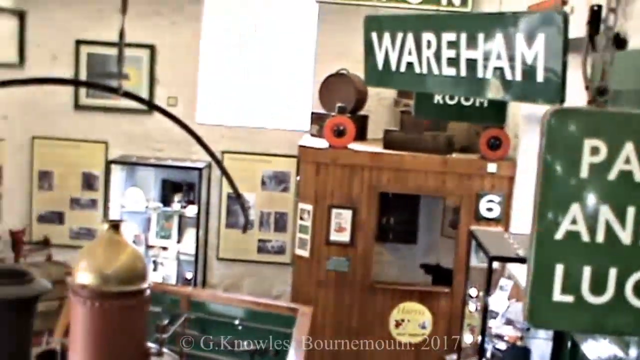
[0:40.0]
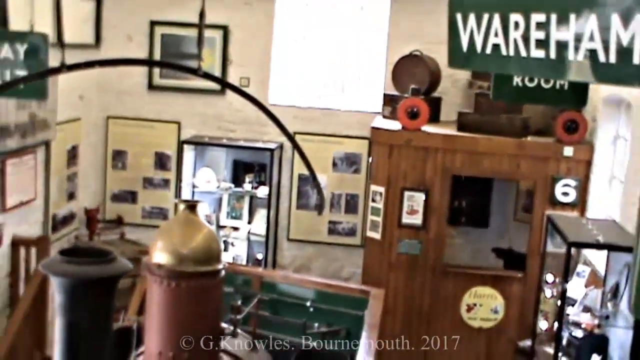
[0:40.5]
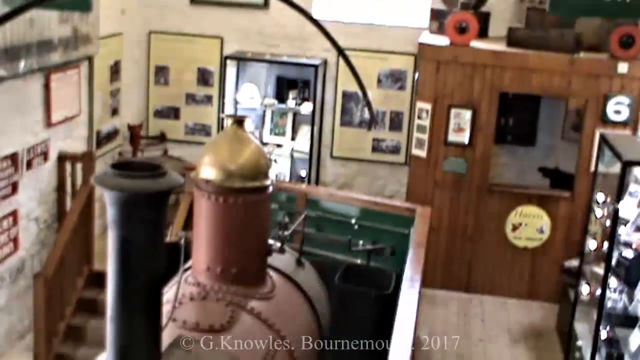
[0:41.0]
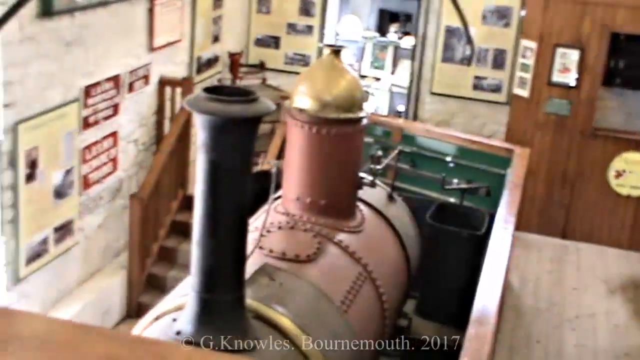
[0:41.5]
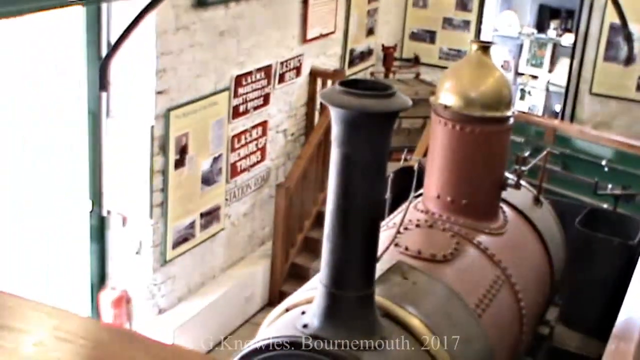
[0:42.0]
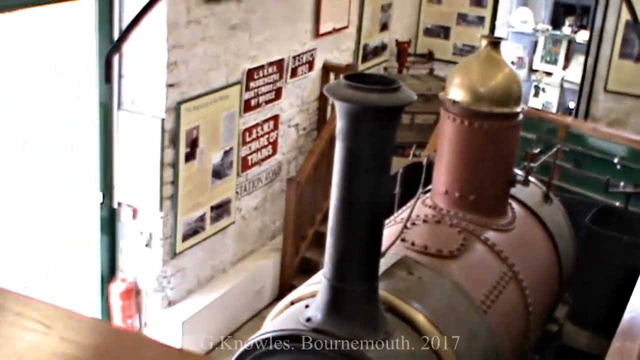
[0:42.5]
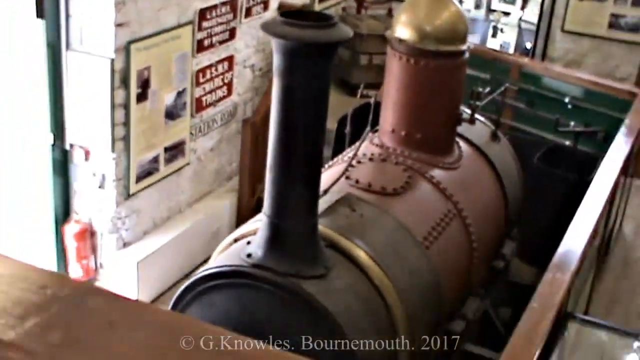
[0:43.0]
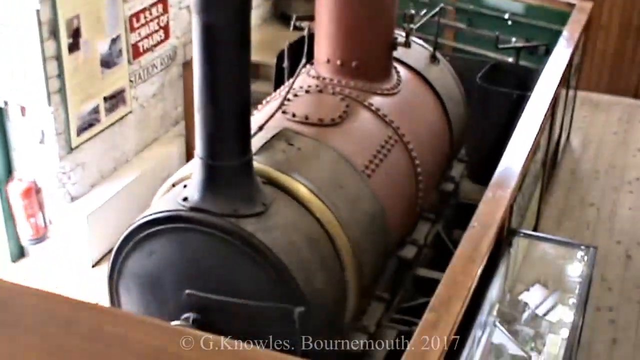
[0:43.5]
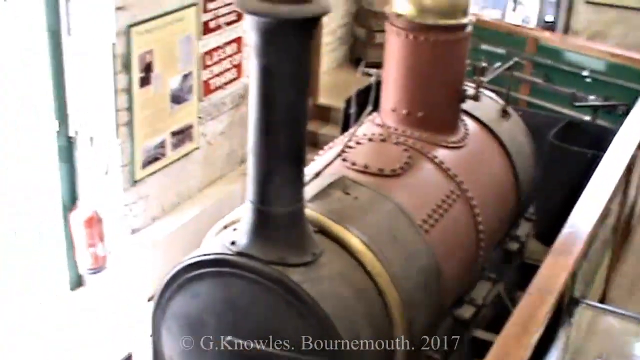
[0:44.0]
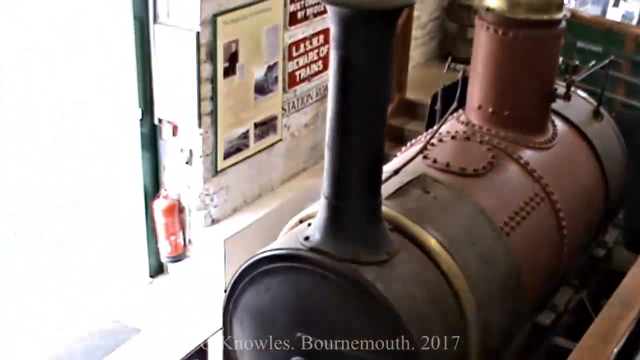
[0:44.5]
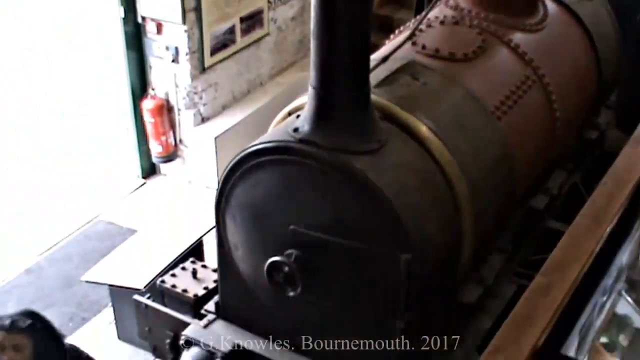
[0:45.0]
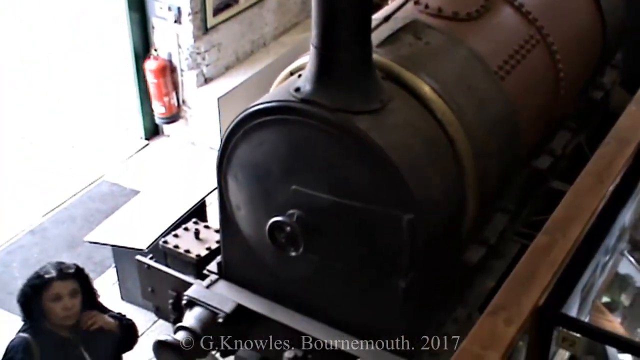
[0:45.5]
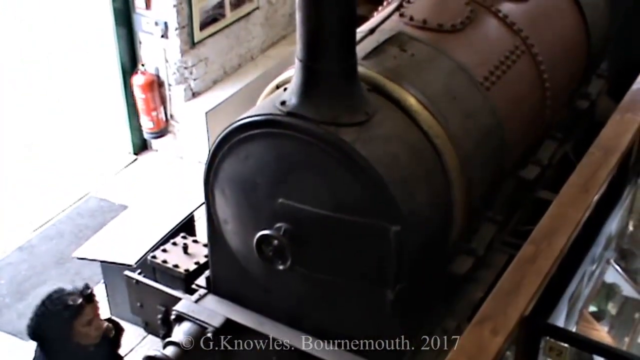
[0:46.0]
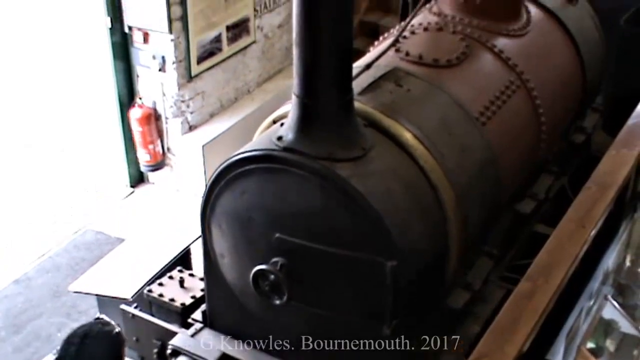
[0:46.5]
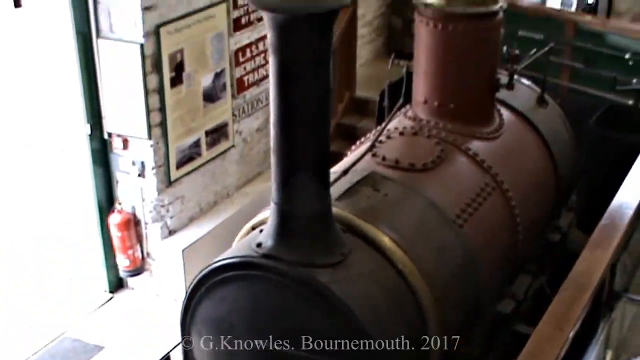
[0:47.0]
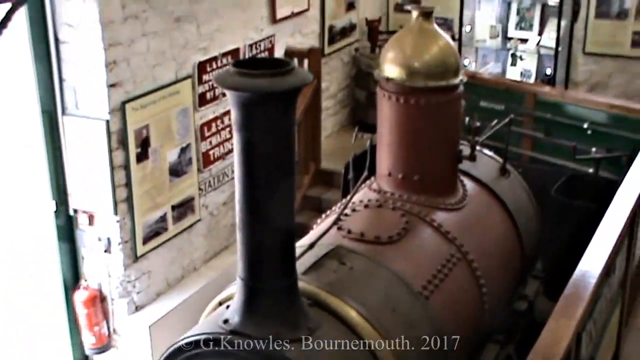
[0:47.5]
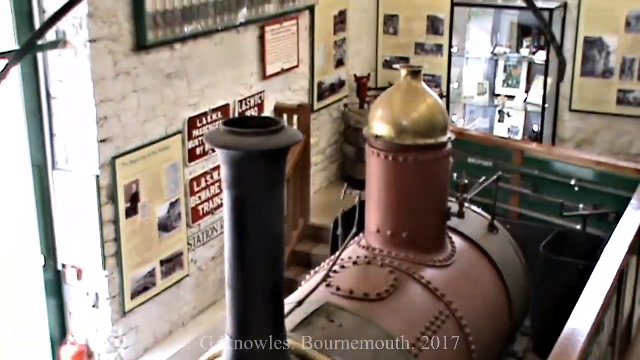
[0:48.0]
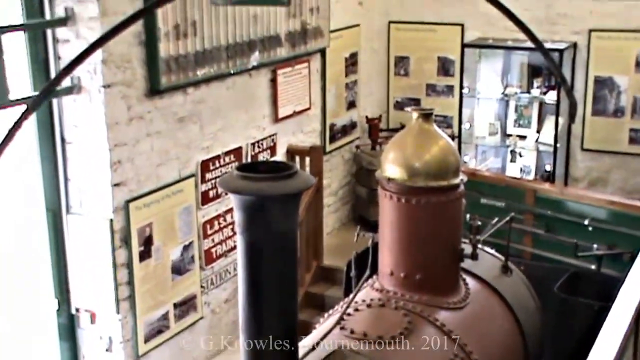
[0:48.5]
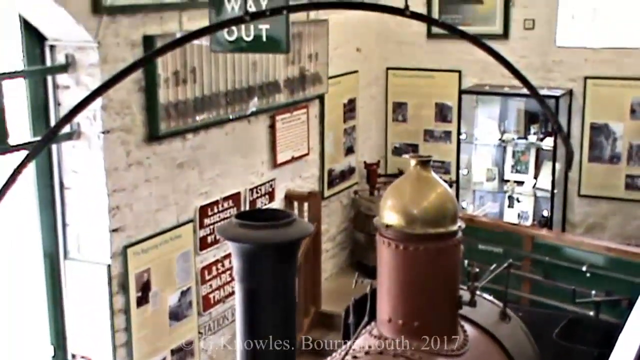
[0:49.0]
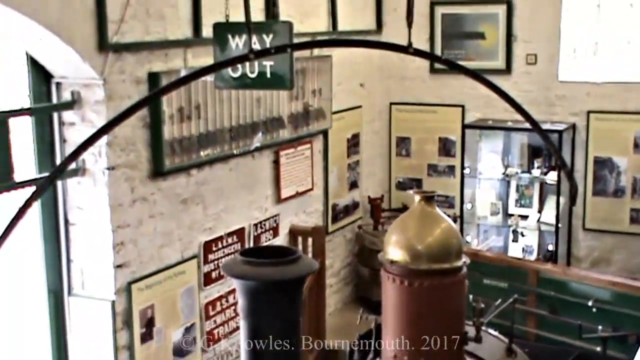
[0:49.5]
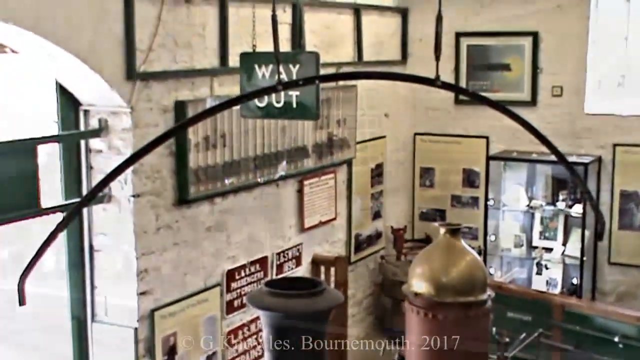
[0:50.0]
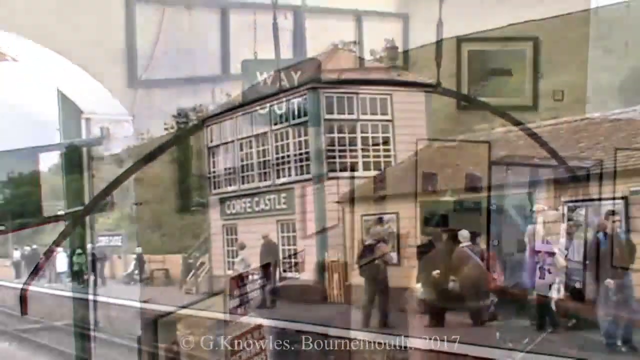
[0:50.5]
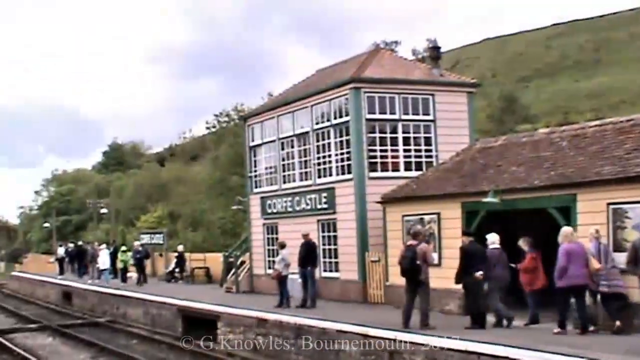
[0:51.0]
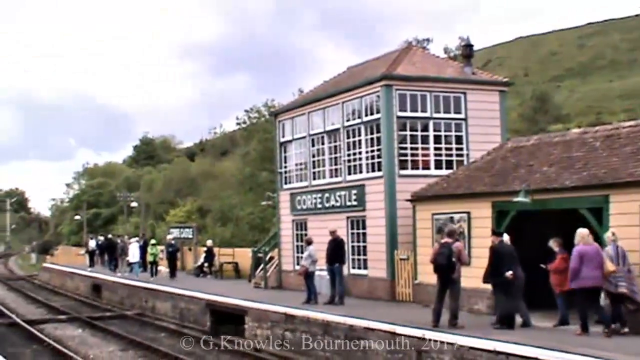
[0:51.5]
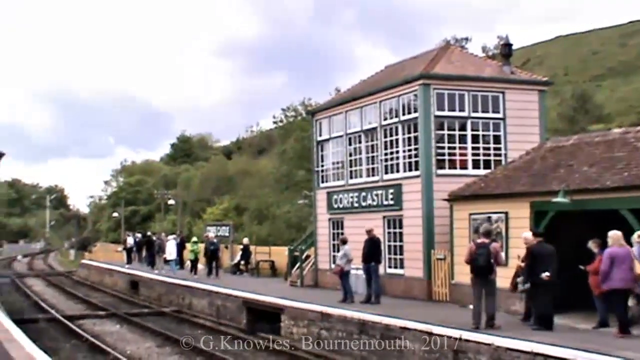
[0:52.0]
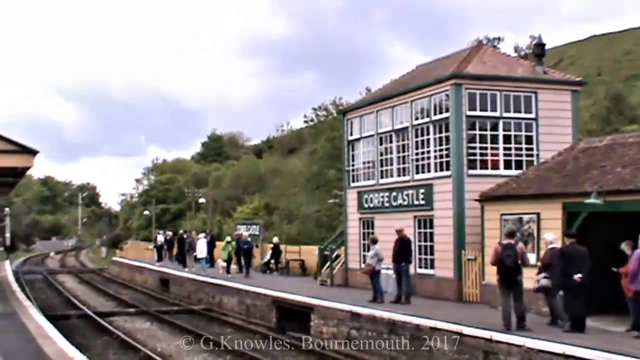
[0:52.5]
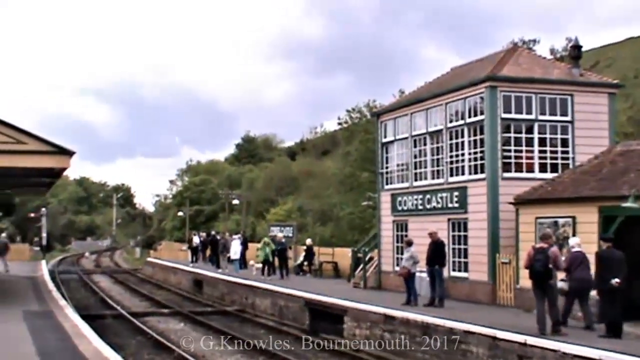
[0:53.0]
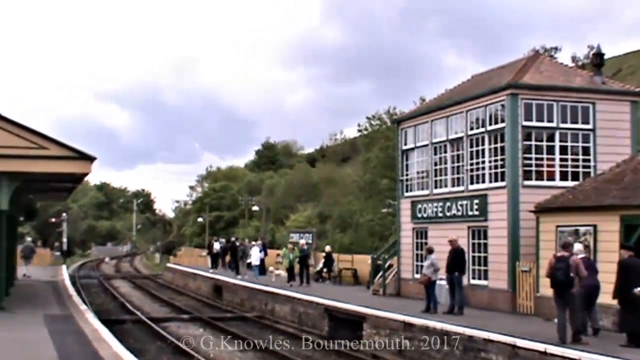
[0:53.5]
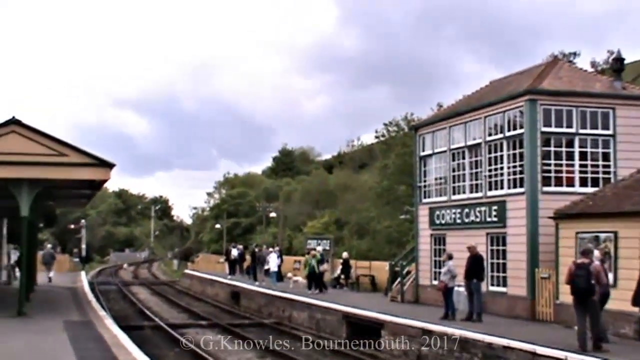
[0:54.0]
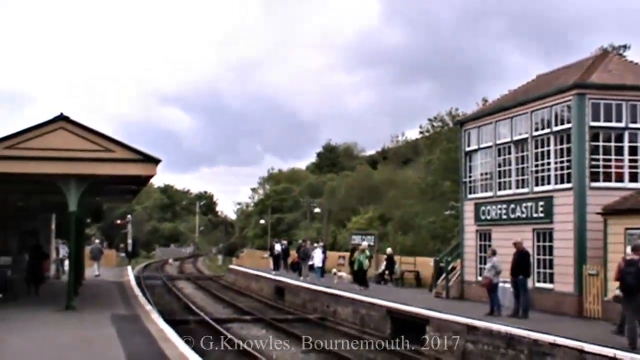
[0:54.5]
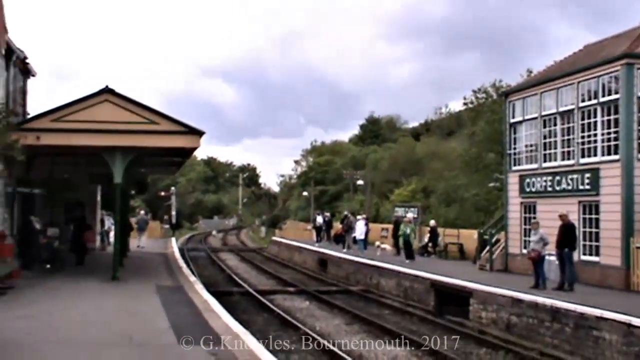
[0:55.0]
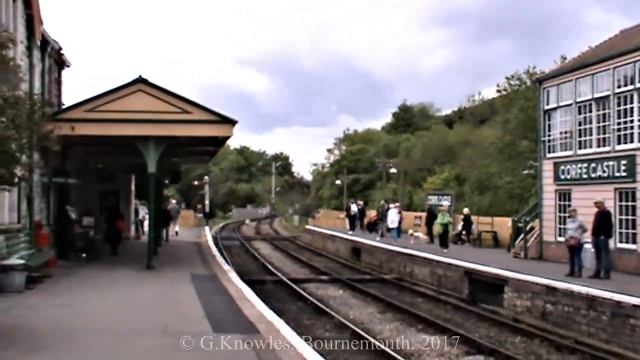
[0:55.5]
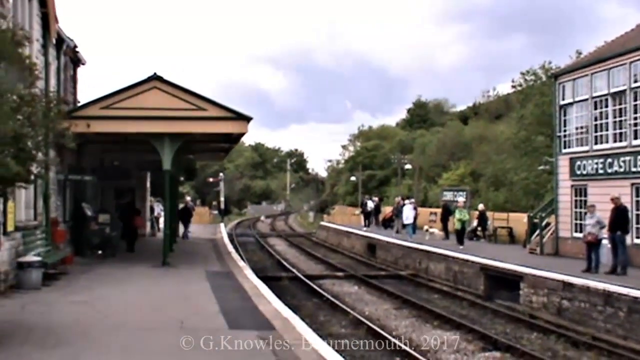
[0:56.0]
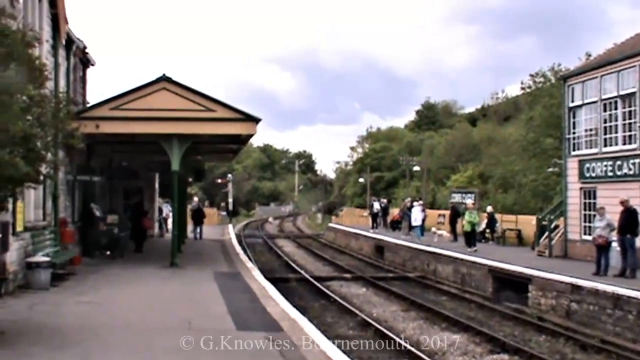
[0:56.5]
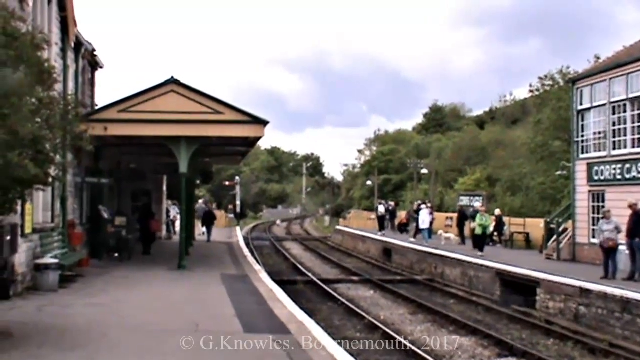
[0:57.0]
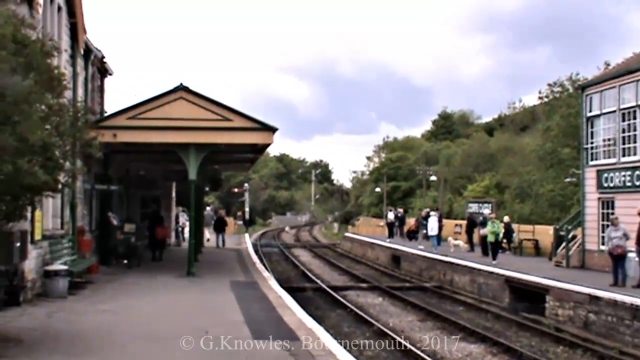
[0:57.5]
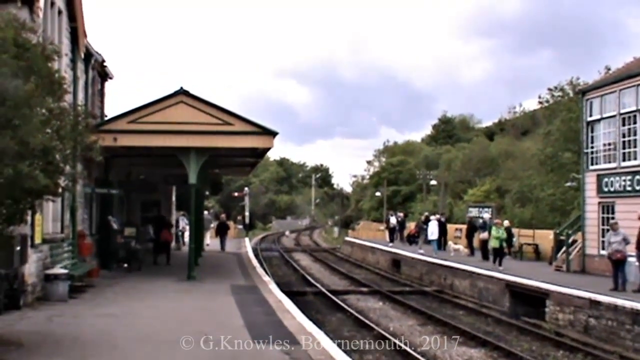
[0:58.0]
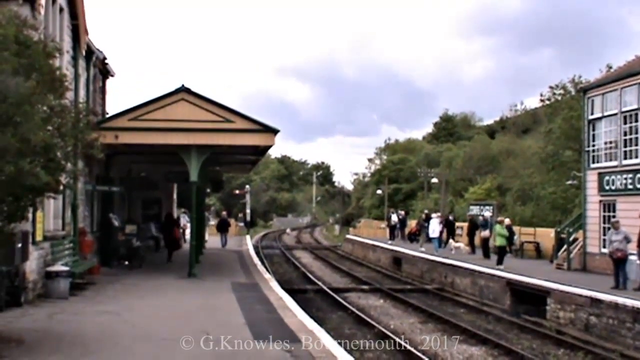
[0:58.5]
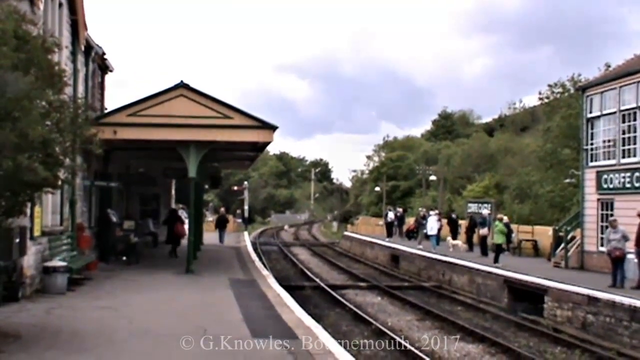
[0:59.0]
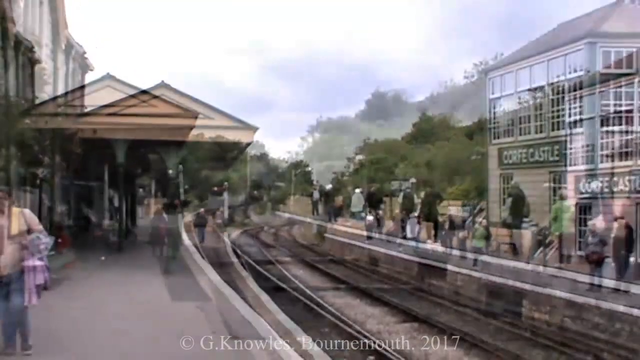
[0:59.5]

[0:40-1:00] More footage of the inside of the building shows a model of the front of a train, red in the middle, with a golden chimney cover on top and a main black chimney shaped like a cylinder. The video then cuts to the outside of the castle, looking at the train station line, which runs through the station like any ordinary line; no train is there and it is no longer in use. People are on both sides of the station line. A building has a sign that seems to read "Corfe Cafe" or possibly "Corfe Castle," and a number of historical-looking settings are shown.